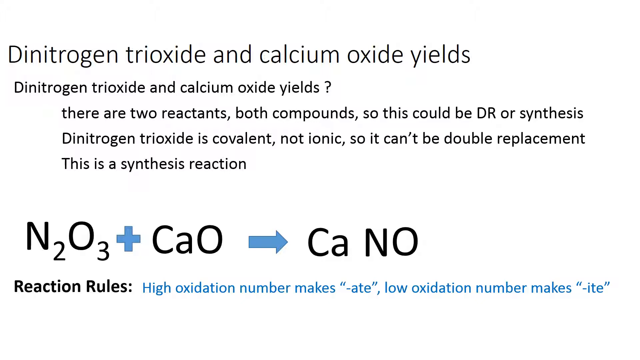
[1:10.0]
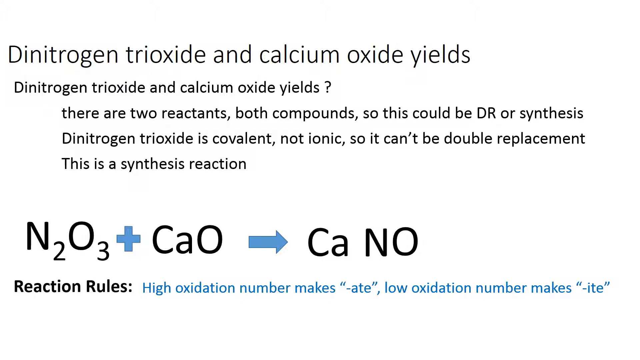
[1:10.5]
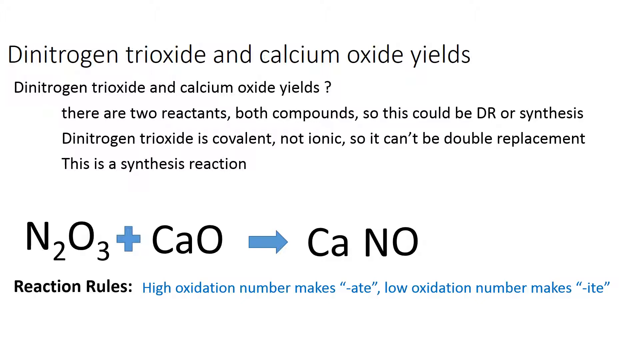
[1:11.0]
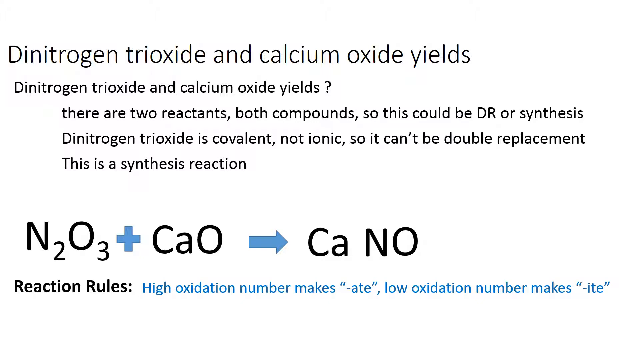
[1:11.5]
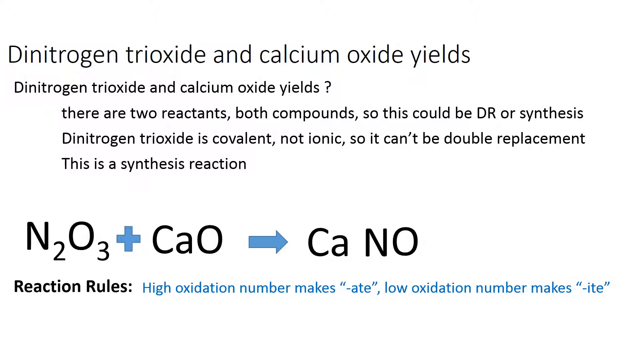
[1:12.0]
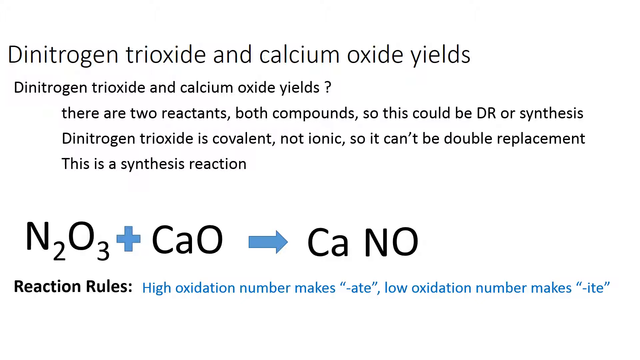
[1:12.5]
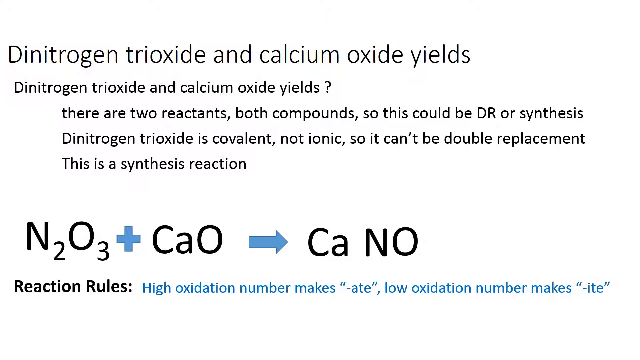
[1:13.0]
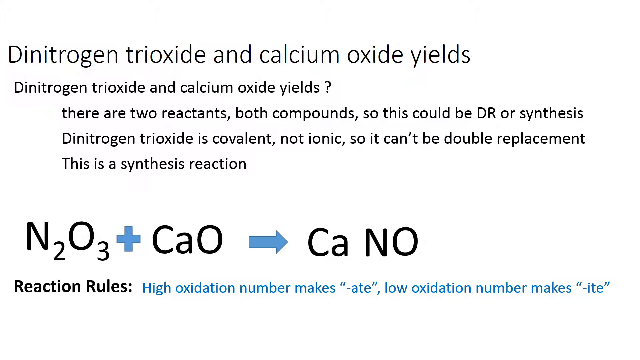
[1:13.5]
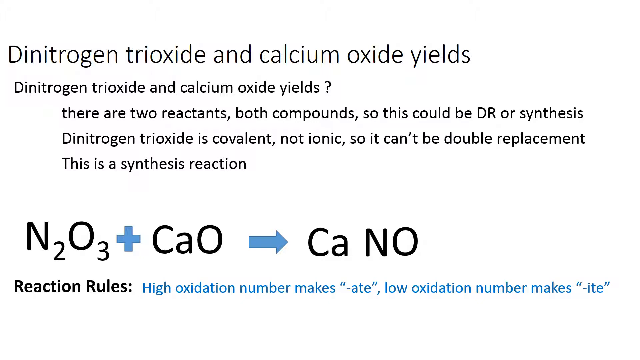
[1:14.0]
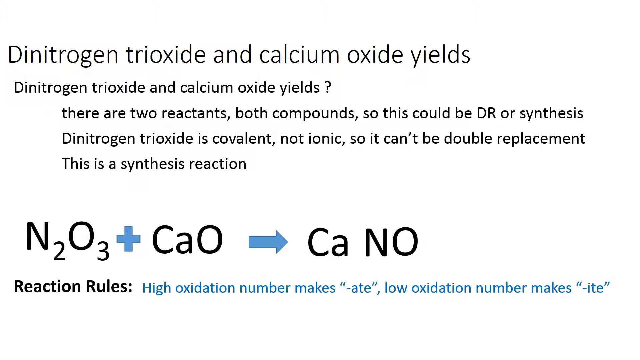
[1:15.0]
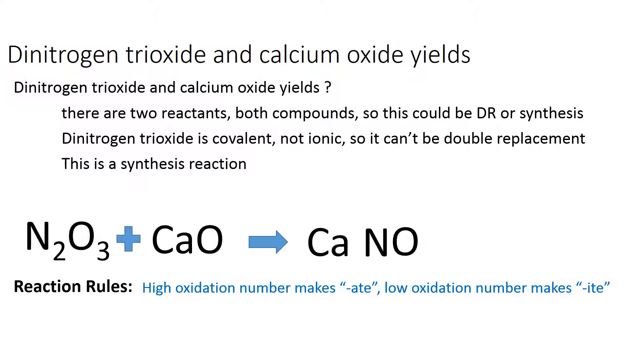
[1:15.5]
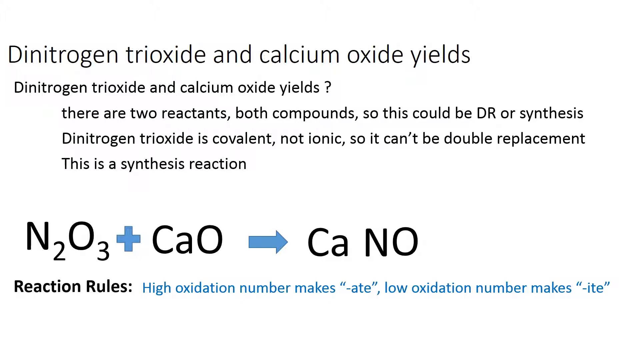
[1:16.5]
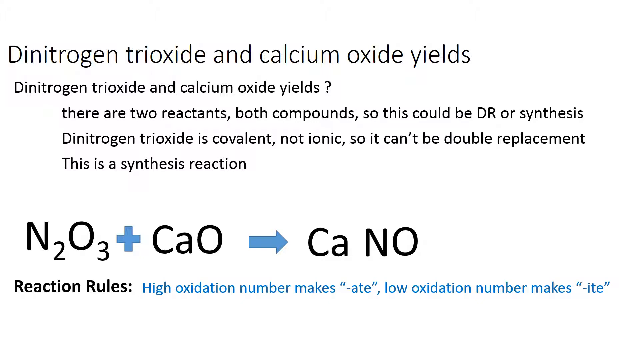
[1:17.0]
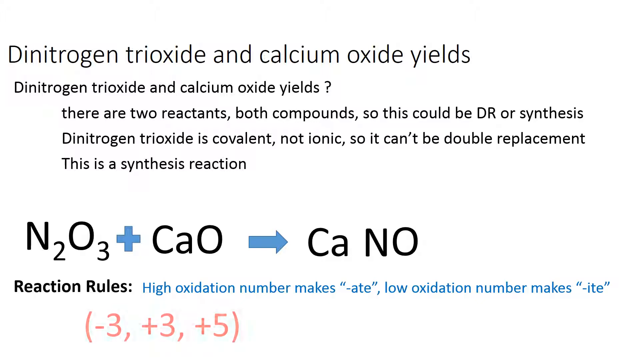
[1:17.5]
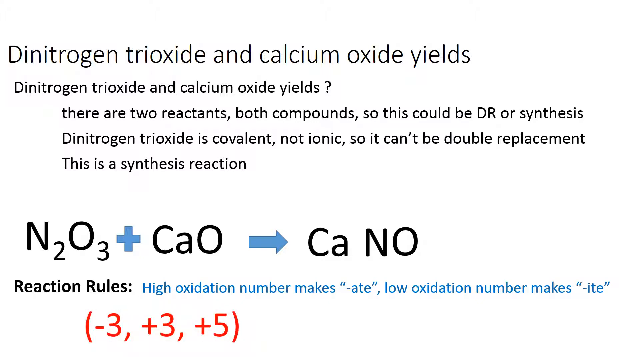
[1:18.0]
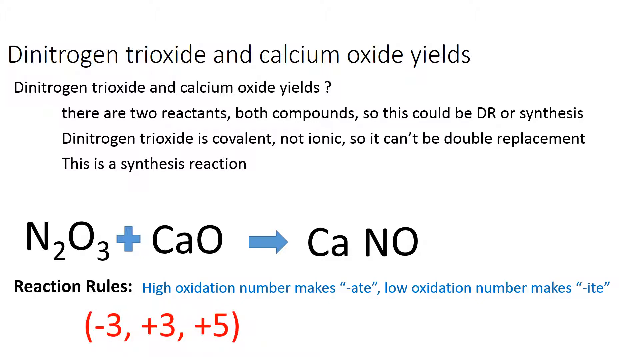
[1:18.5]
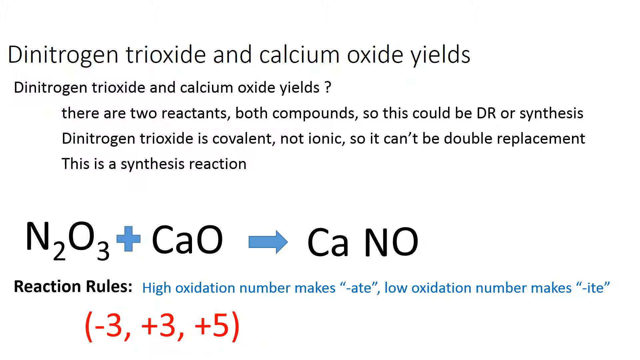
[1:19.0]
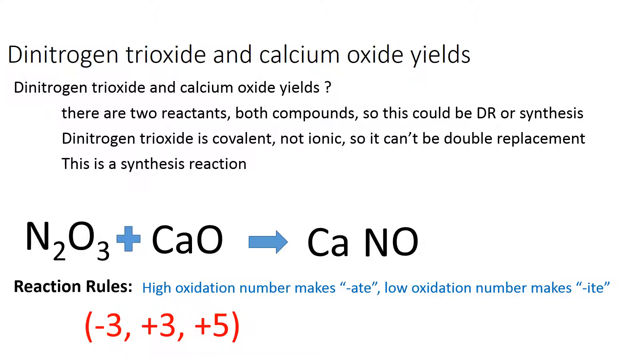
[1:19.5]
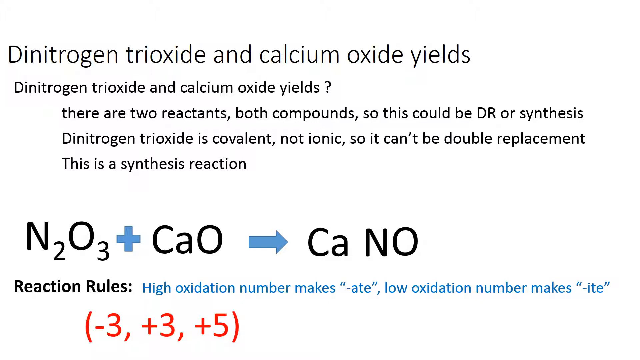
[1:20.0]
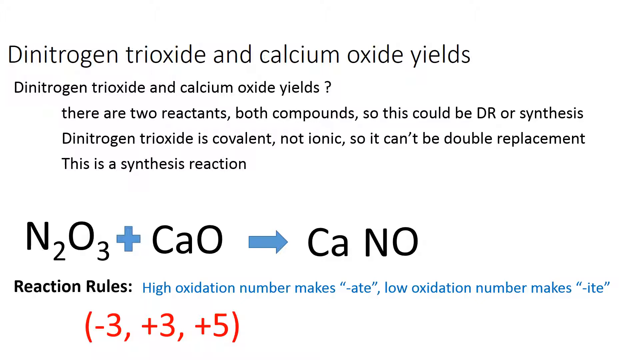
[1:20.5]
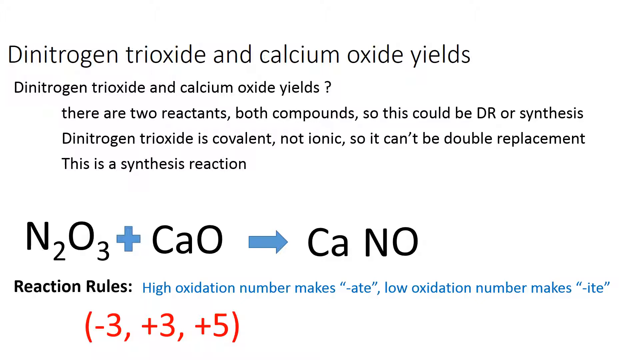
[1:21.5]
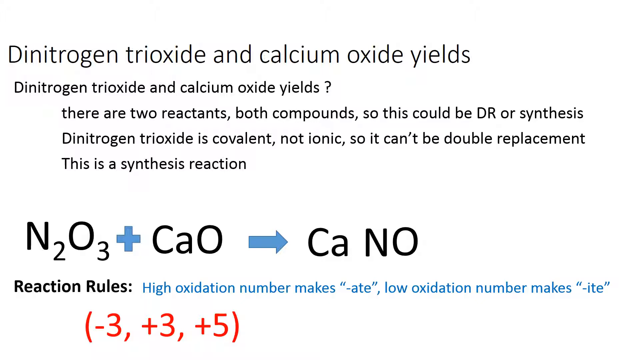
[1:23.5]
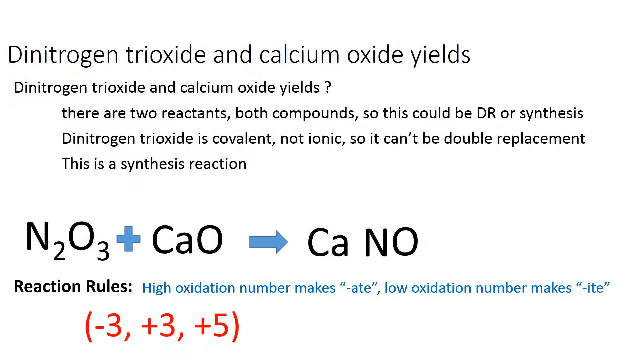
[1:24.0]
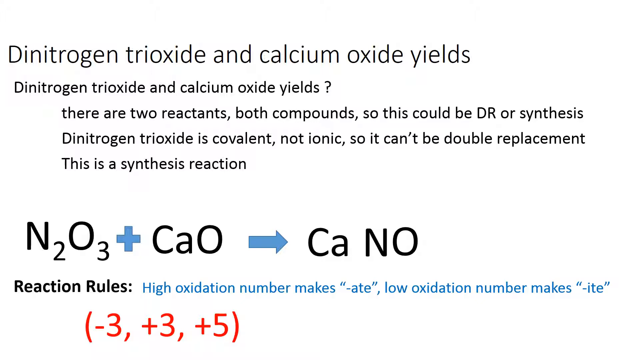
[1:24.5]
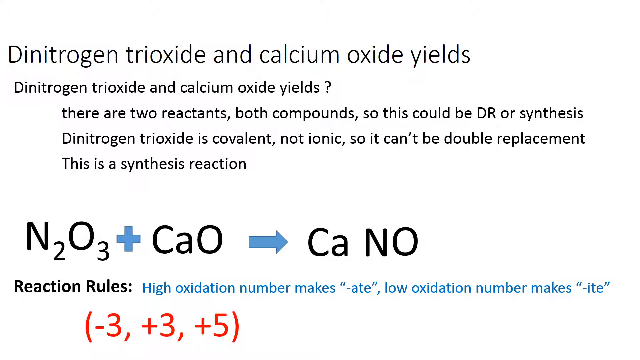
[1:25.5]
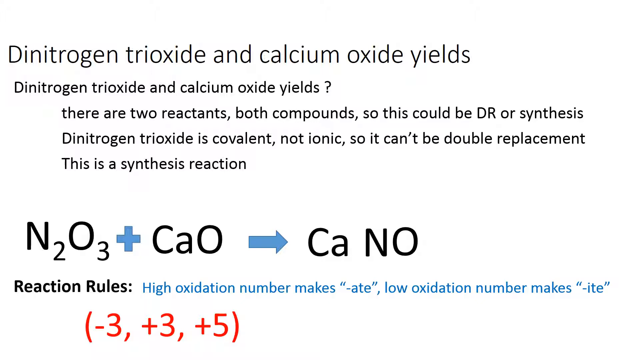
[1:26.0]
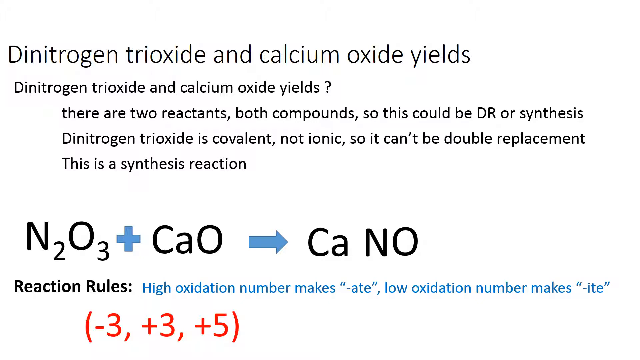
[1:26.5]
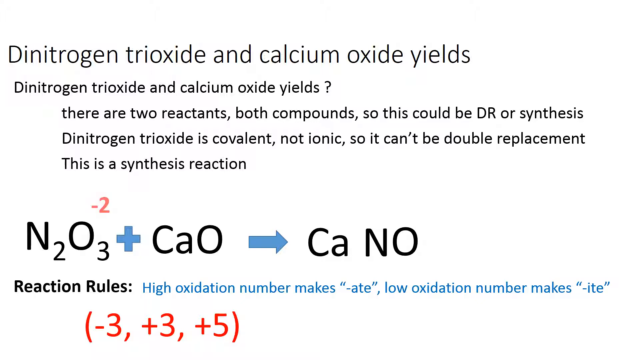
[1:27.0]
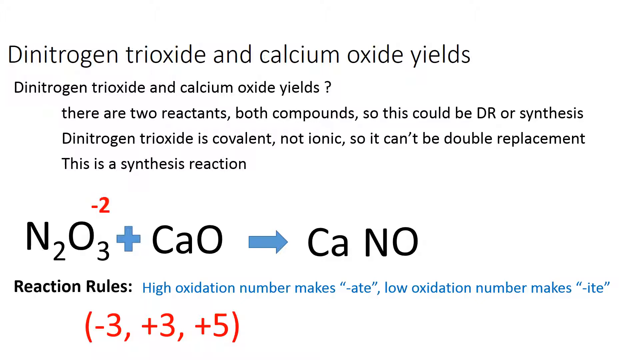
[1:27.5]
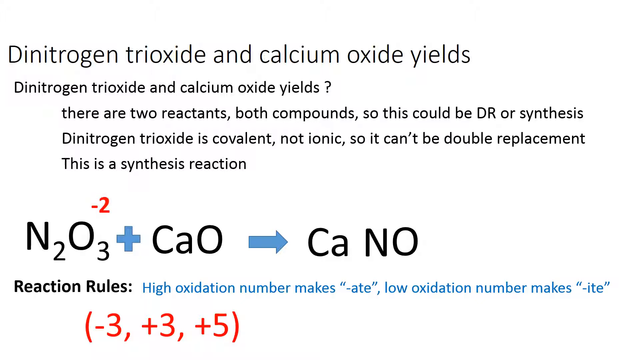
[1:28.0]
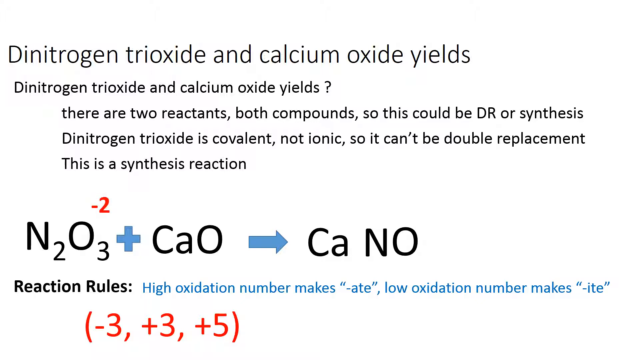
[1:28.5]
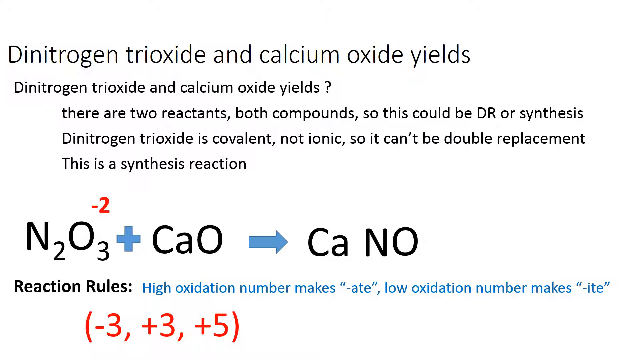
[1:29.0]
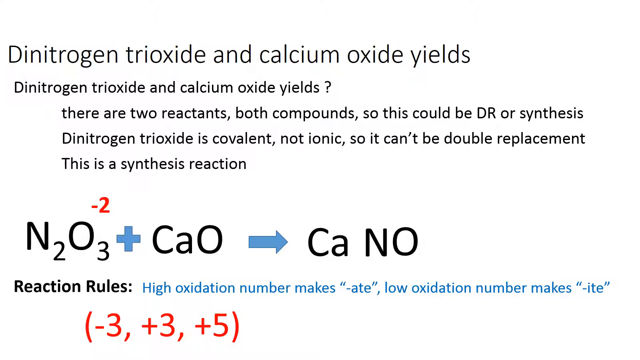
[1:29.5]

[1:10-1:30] The background is an empty white. Black text at the top says "Dinitrogen Trioxide and calcium oxide yields." Beneath it, smaller black text says "Dinitrogen trioxide and calcium oxide yields" with a ? to its right, followed by black lines saying "there are two reactants, both compounds, so this could be DR or synthesis," "Dinitrogen trioxide is covalent, not ionic, so it can't be double replacement," and "This is a synthesis reaction." Beneath that is larger black text "N2O3," a blue + mark, black text "CaO," a blue arrow, black text "Ca," and to its right black text "NO." Below is black text "Reaction Rules:" with blue text to its right saying "High oxidation number makes "-ate", low oxidation number makes "-ite"." Beneath that, red text appears that says "(-3, +3, +5)." Red text that says "-2" appears above "N2O3."